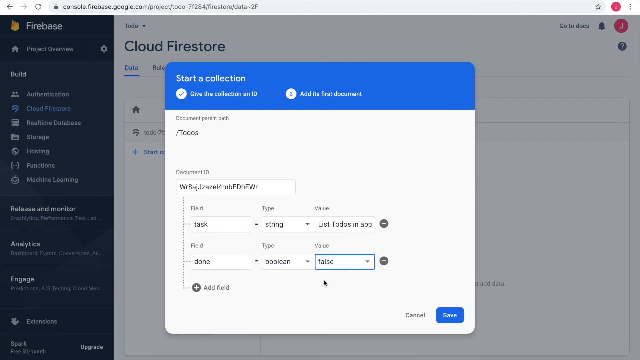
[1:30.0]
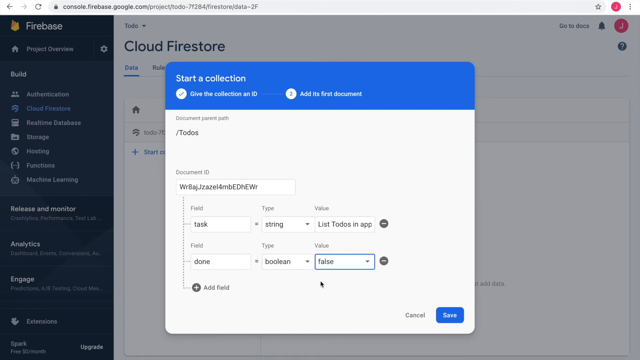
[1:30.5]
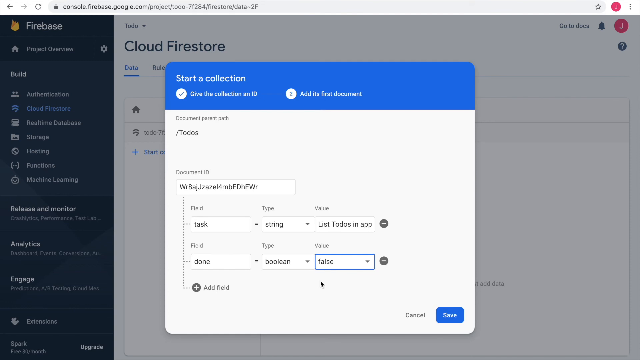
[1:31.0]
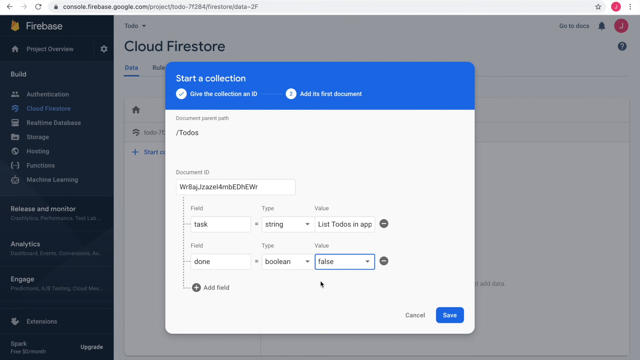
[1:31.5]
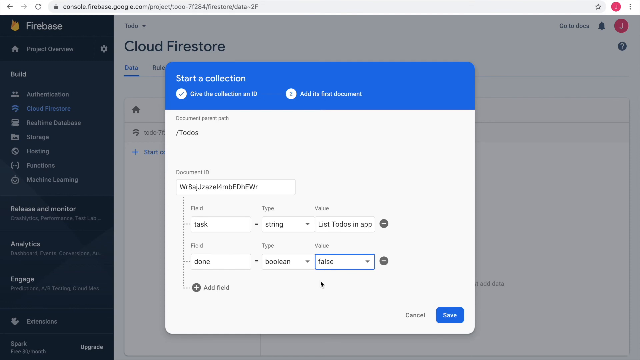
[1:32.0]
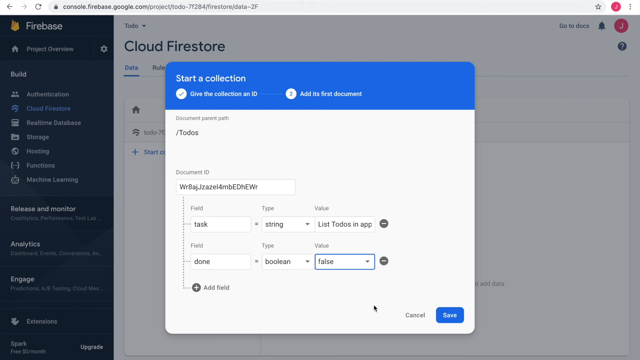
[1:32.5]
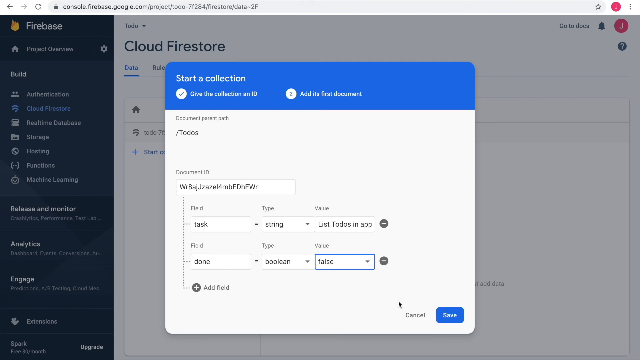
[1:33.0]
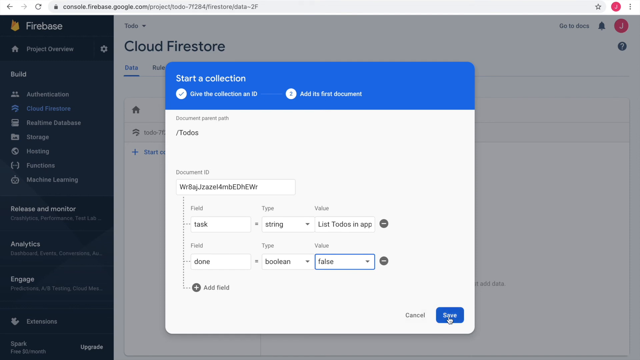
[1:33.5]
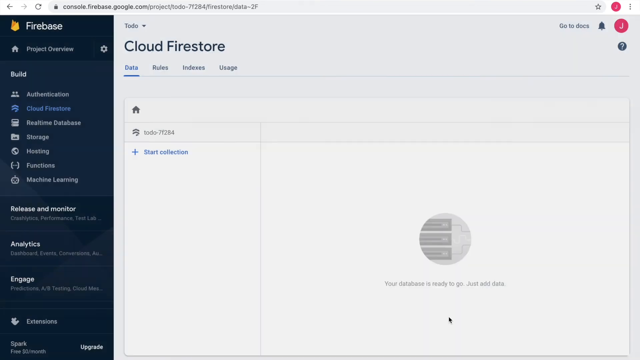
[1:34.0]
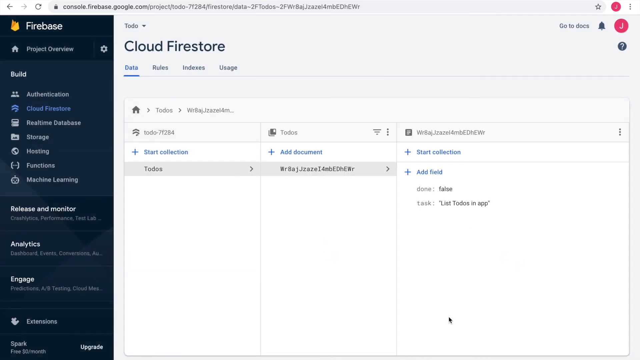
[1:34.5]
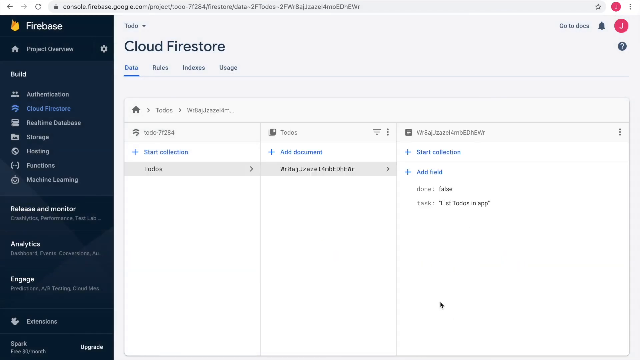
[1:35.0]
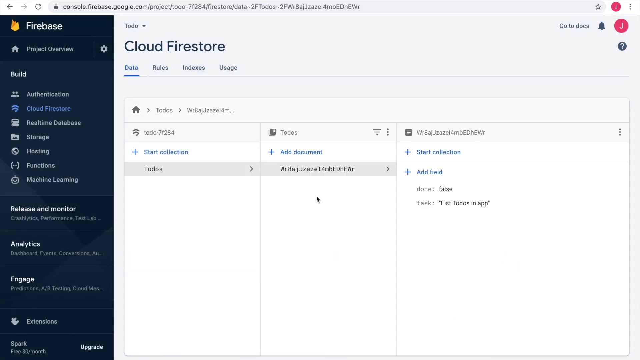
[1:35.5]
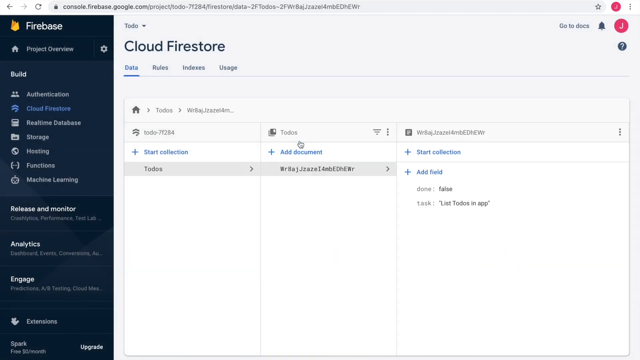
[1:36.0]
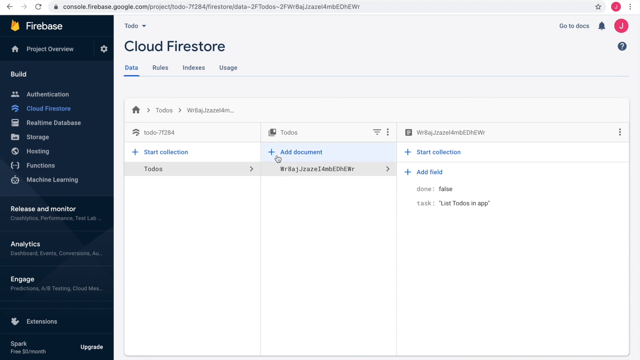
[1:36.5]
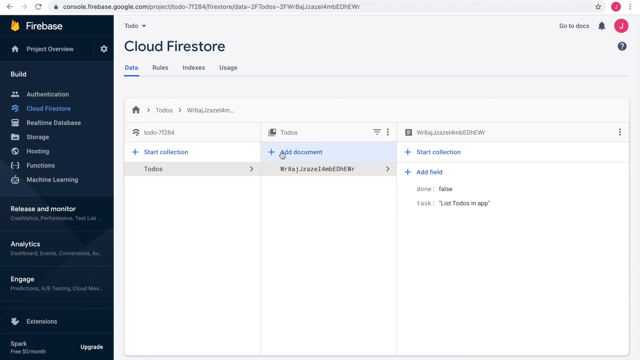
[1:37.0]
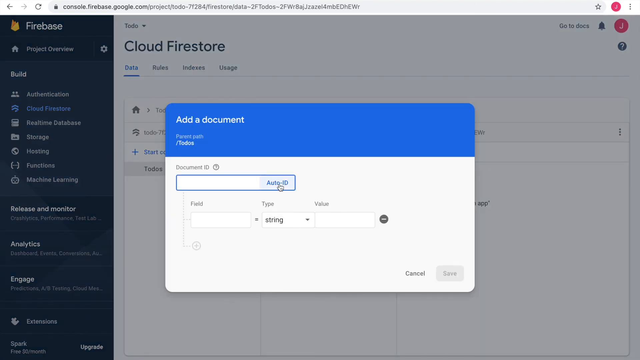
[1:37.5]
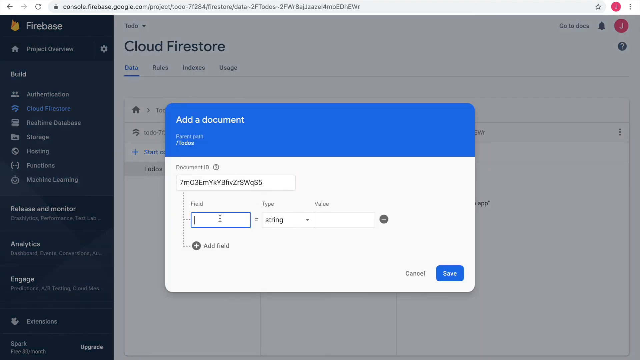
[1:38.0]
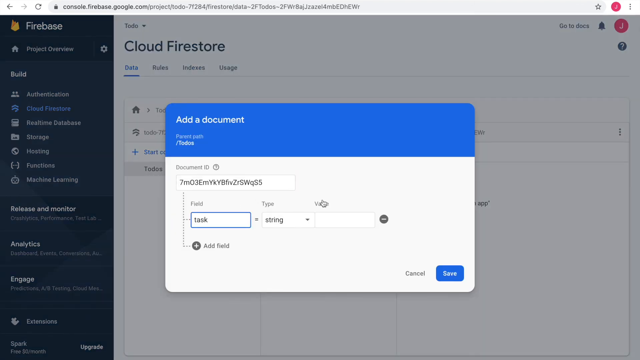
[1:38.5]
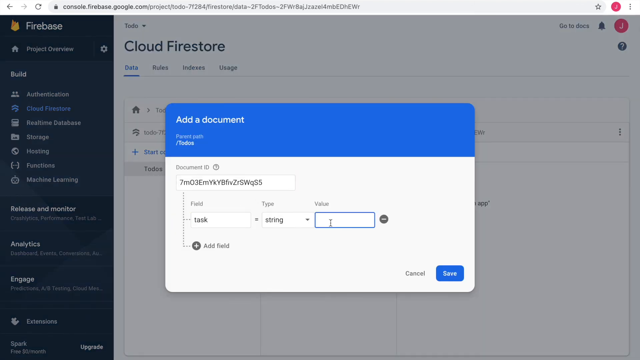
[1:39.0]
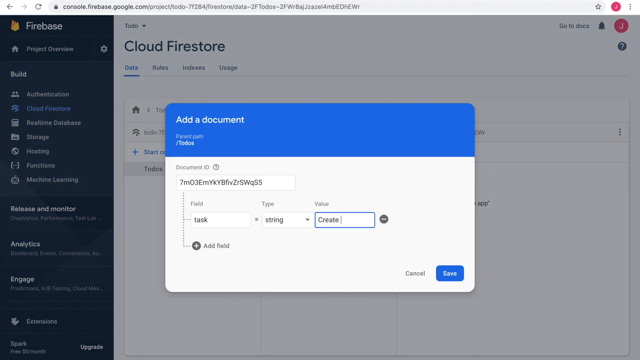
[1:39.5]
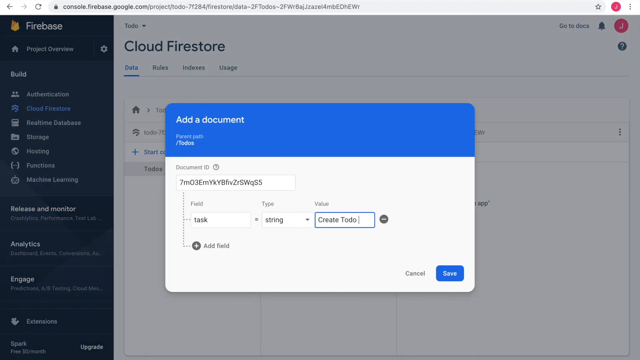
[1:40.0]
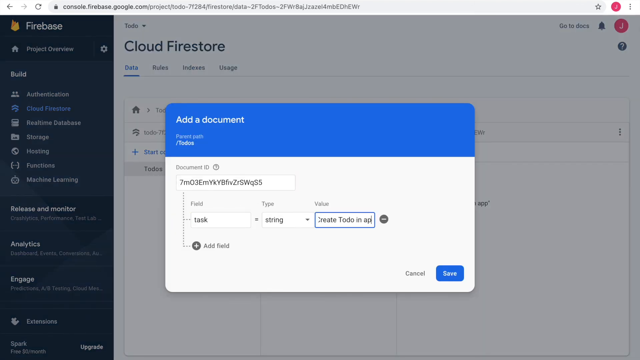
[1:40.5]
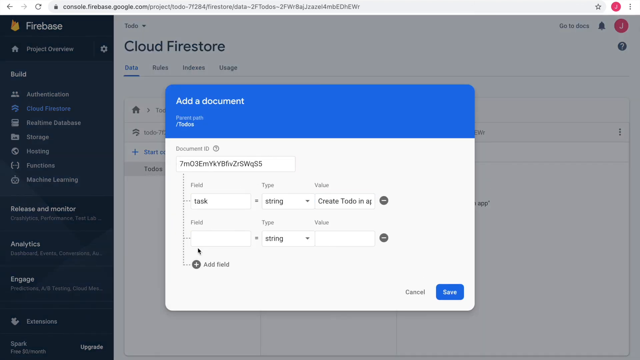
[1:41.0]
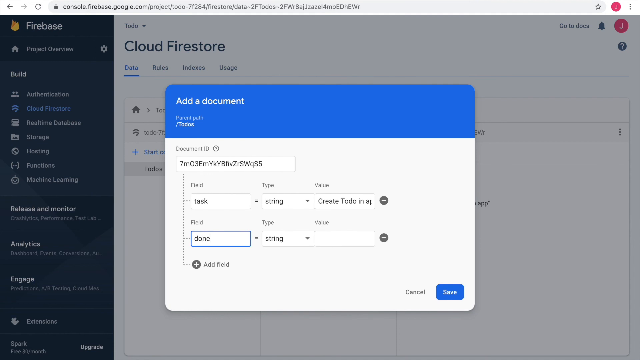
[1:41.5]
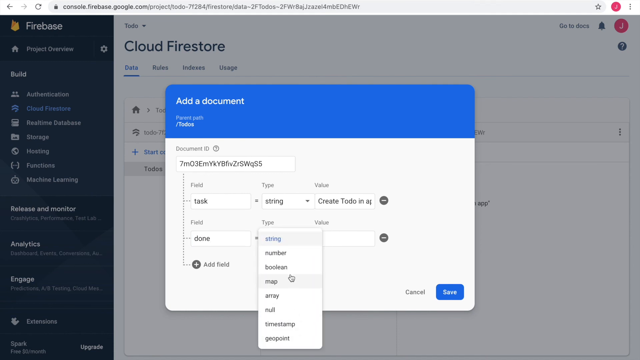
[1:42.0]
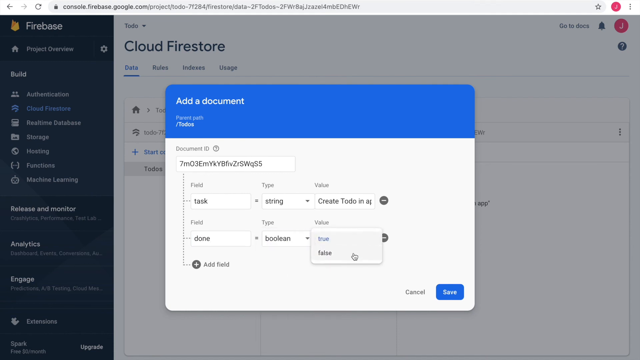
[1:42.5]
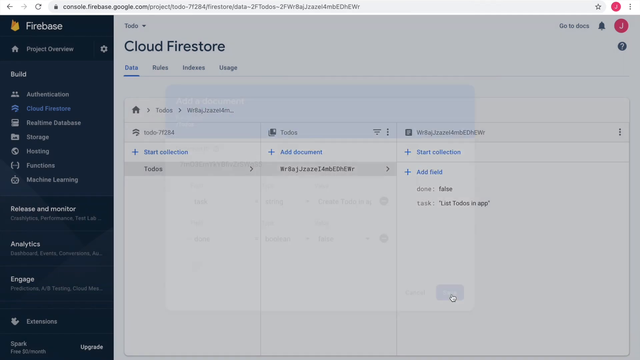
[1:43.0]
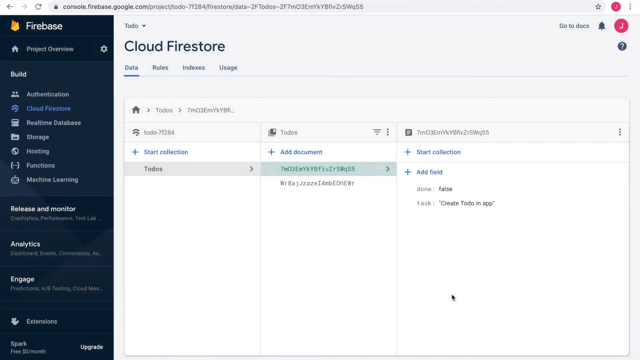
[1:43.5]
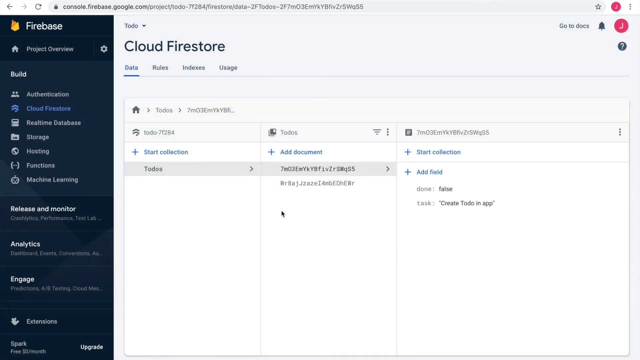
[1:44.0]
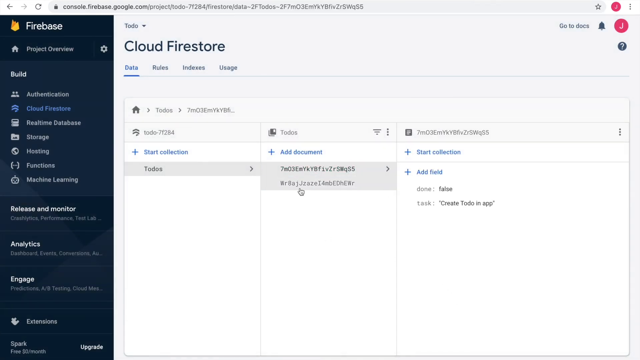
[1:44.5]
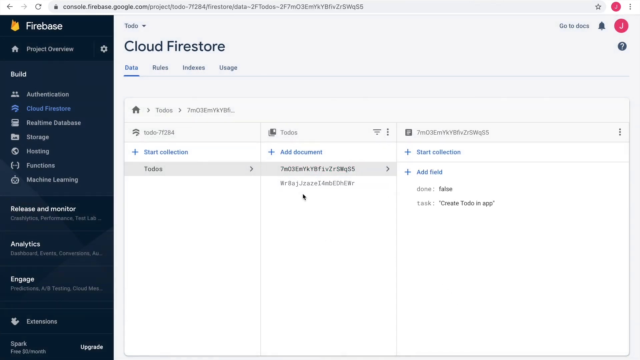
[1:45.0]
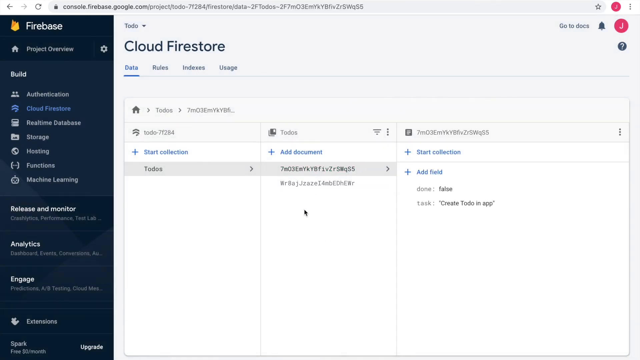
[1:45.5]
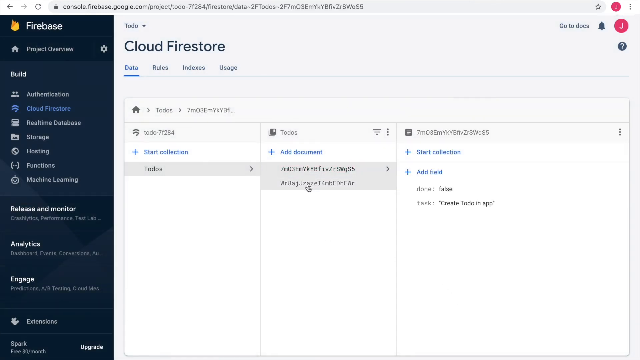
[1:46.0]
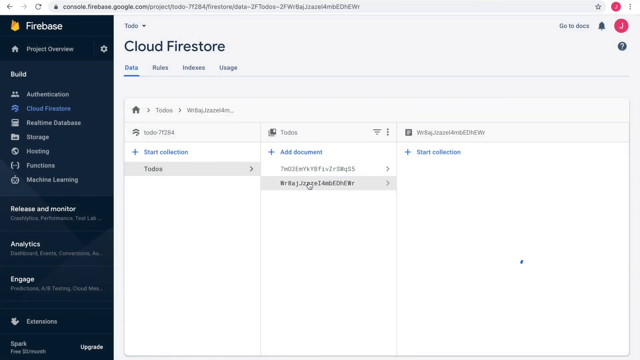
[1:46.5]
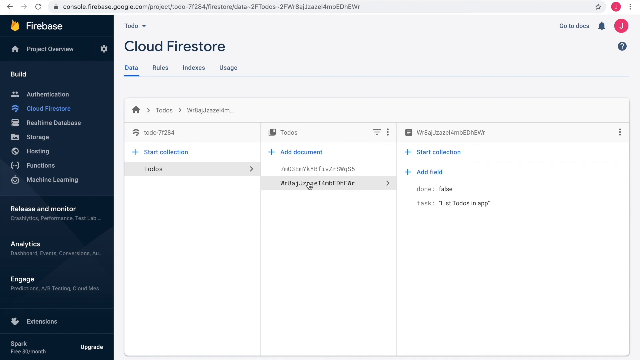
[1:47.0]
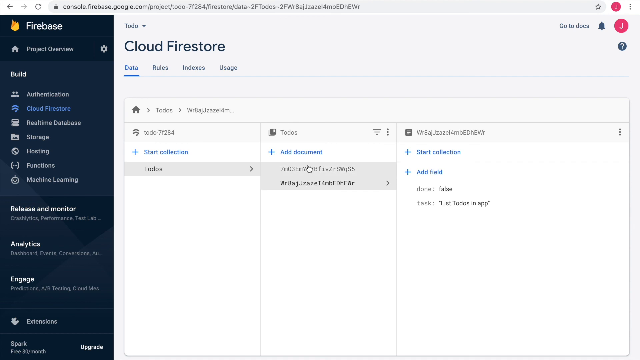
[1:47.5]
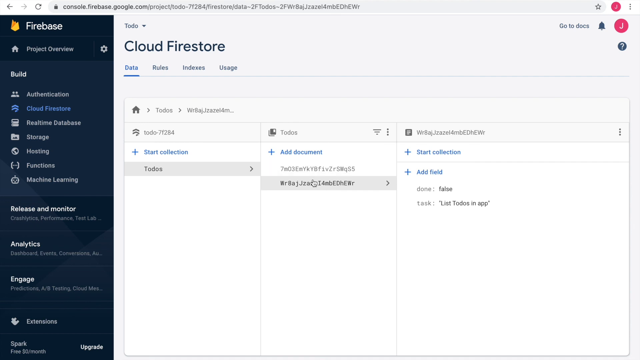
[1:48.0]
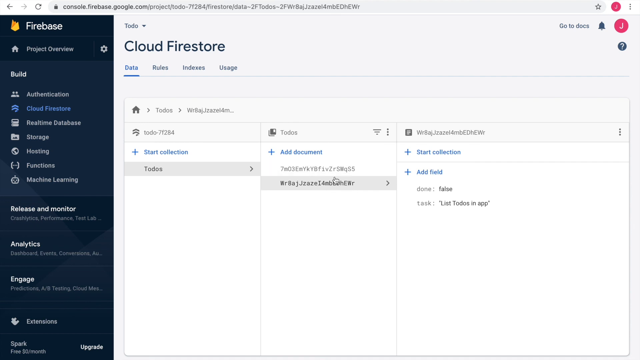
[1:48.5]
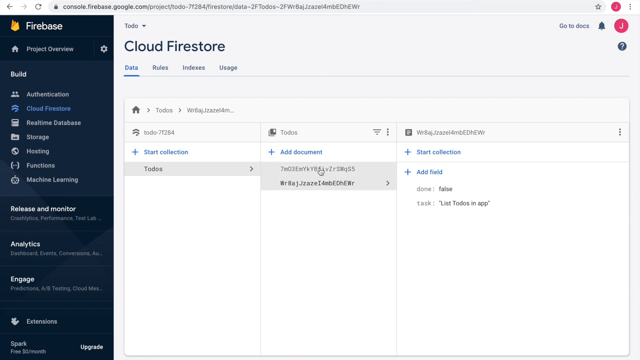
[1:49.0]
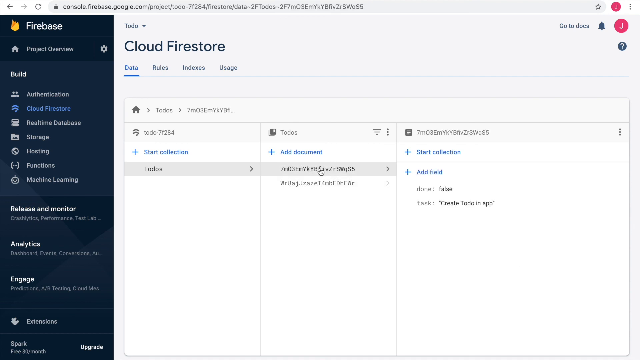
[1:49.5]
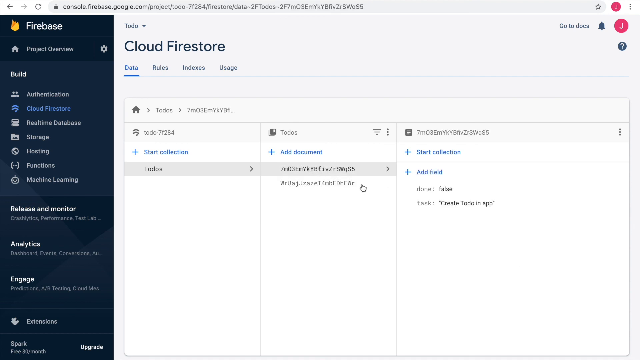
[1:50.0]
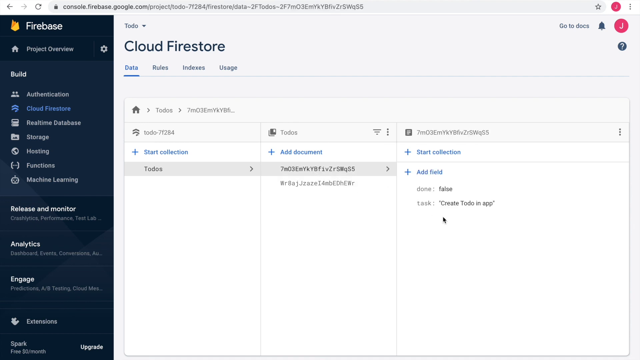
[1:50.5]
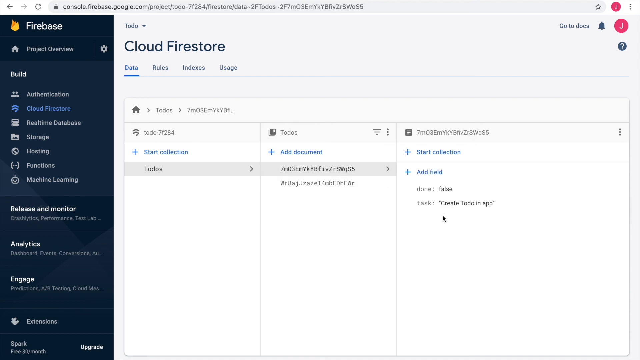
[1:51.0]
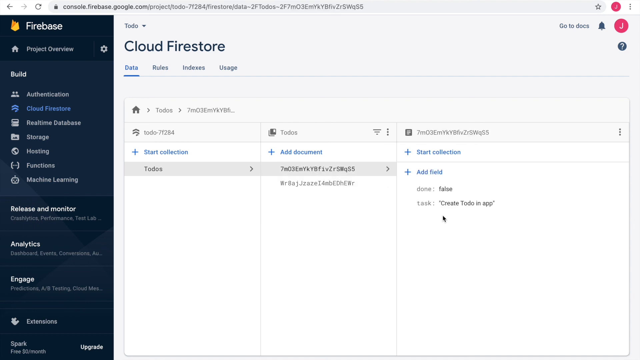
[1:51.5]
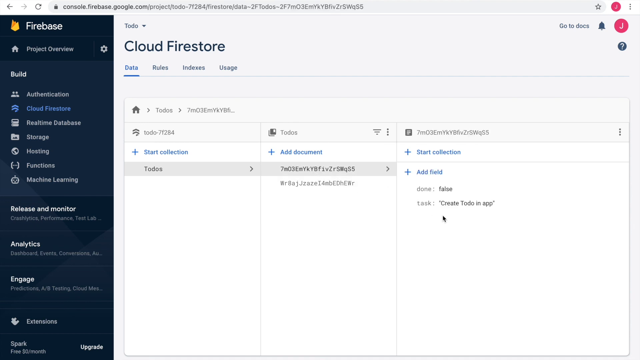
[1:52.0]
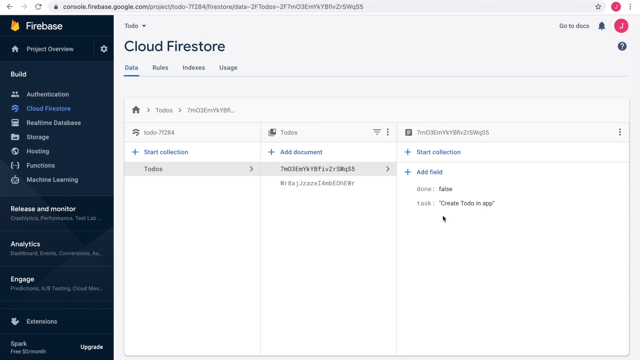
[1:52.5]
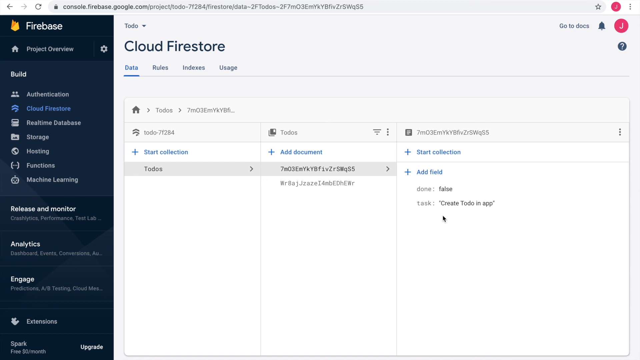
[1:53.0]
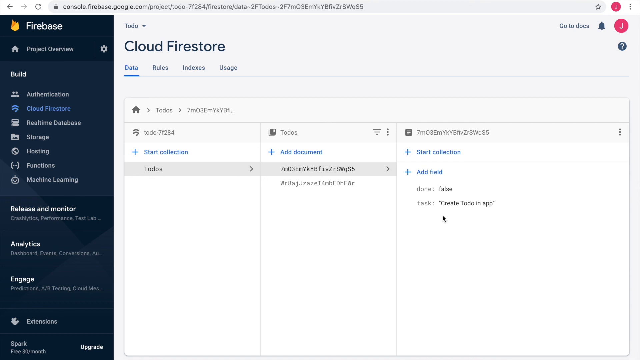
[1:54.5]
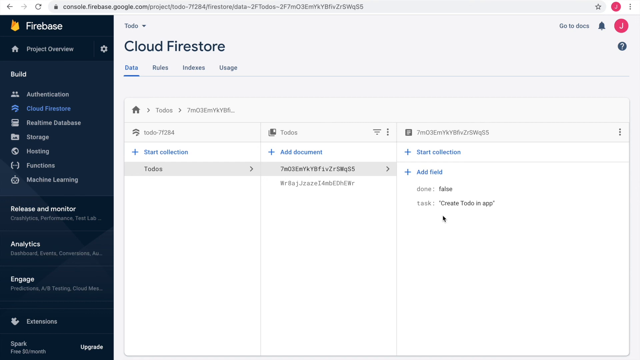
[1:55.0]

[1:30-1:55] Still in Cloud Firestore, with the website in the background, the cursor shows how to add a document to a collection, including entering the task ID and saving it. The cursor continues to move, selecting different options, including the add a document tab, which pops up a closeable blue tab with a blue save button and a white cancel button with black lettering at the bottom. The document continues to be put together as fields are selected, with the entry referred to as a task to be created in Cloud Firestore.